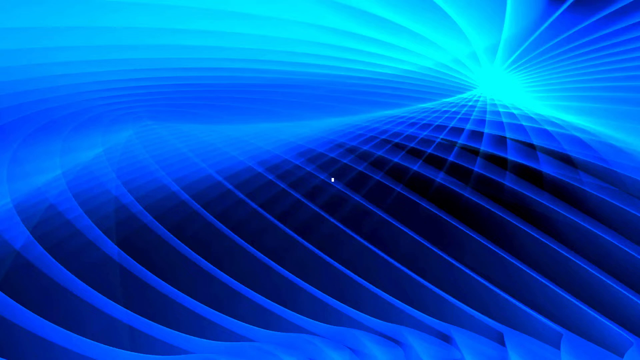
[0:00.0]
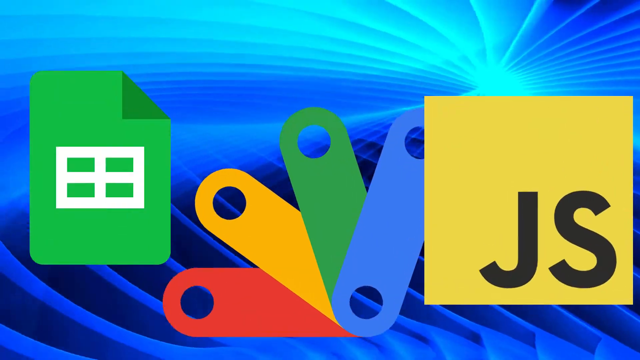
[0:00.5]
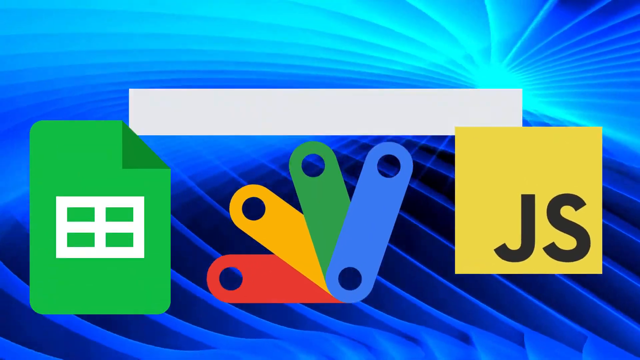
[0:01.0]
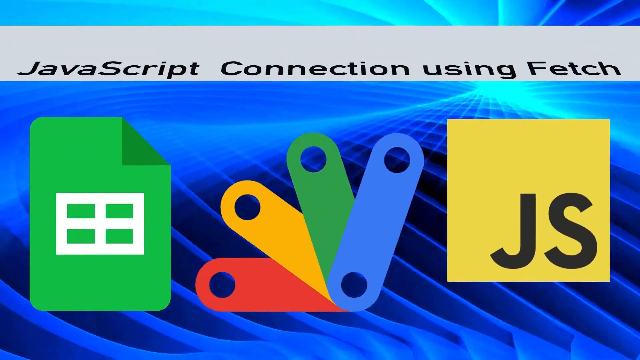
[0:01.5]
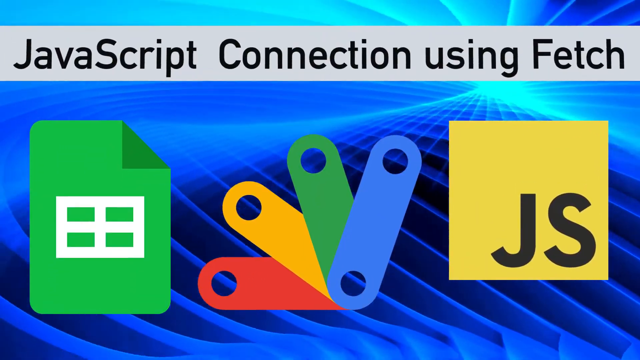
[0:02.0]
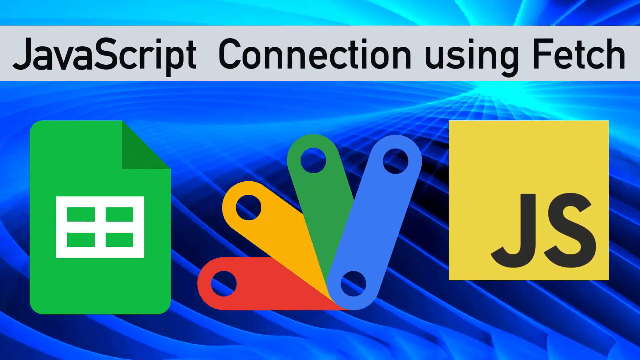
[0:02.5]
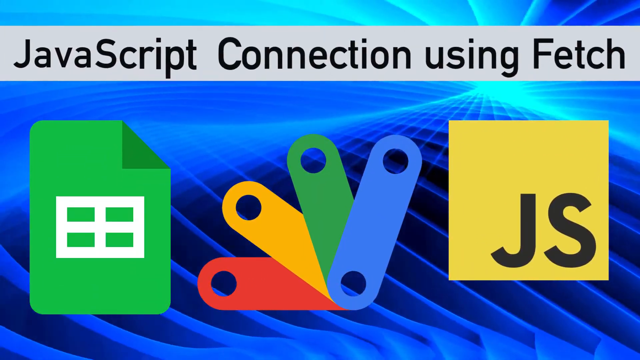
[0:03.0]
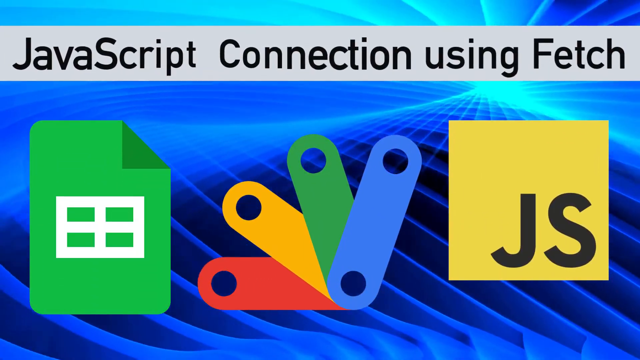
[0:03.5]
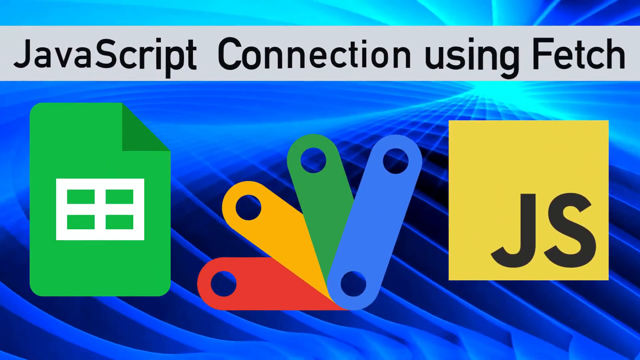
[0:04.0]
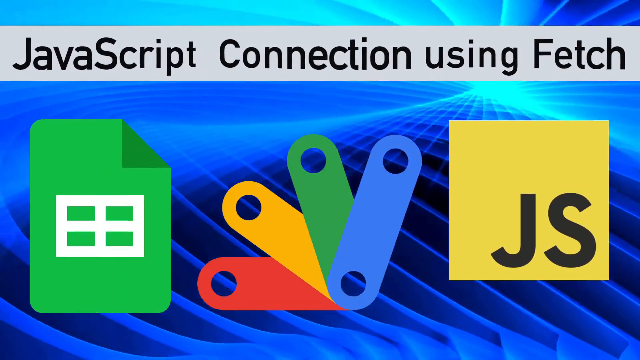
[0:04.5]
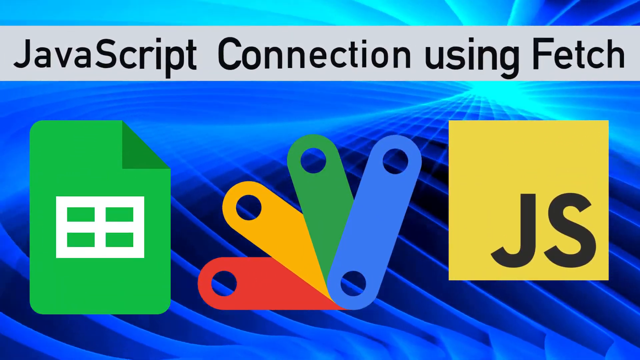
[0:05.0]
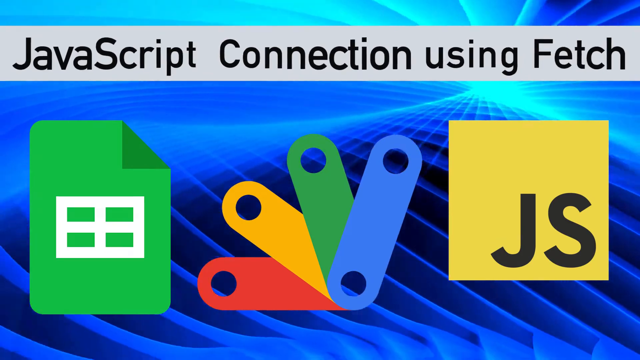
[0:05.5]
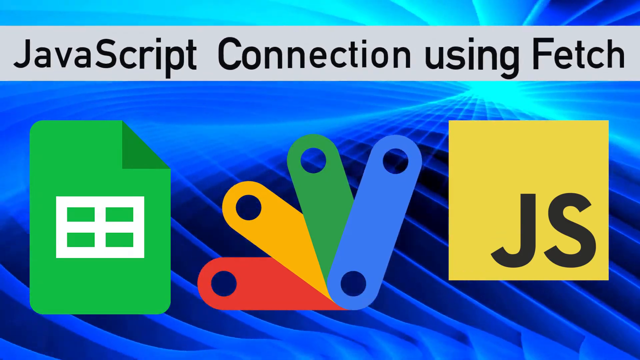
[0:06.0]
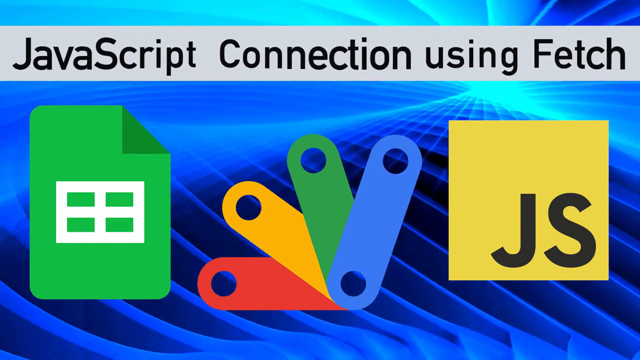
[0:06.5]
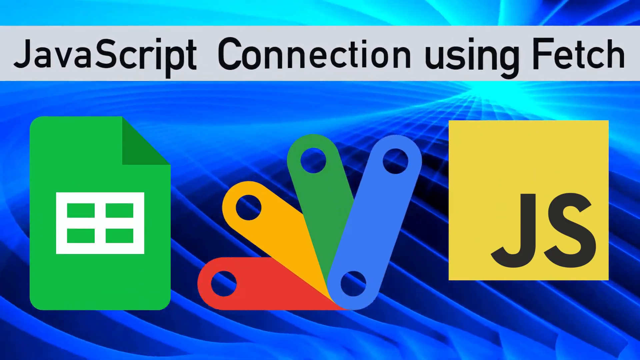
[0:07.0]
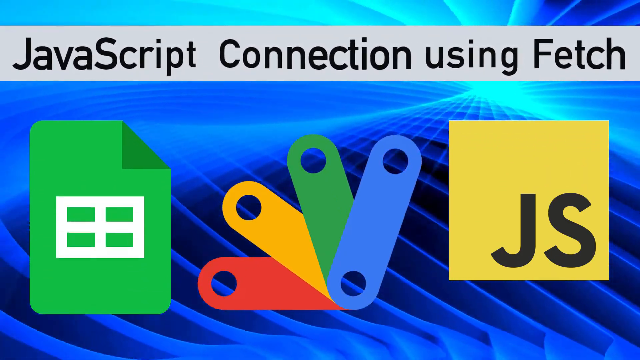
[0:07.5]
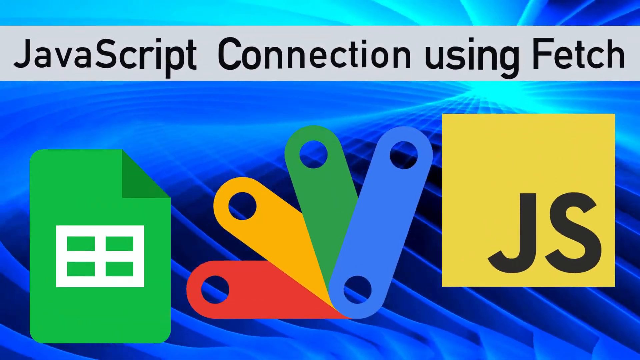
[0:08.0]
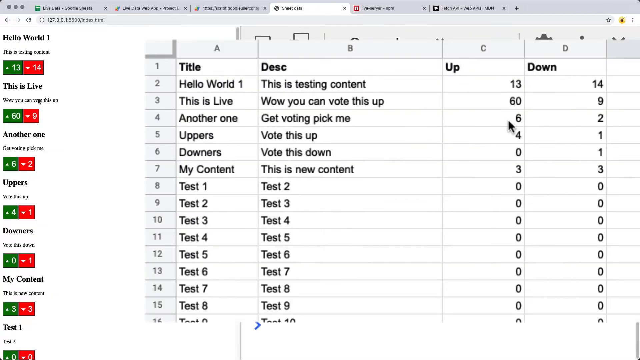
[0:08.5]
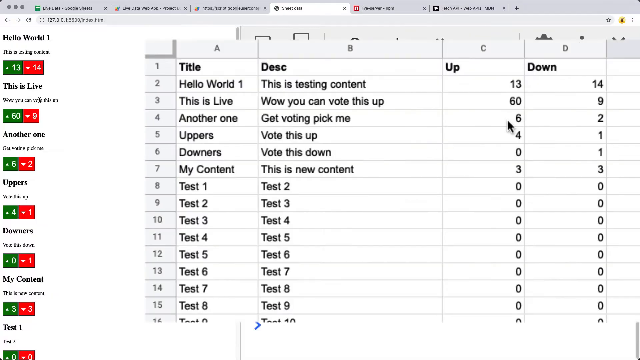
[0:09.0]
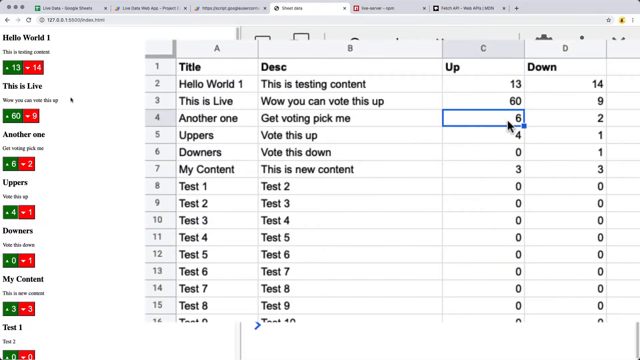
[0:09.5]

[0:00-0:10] The video concerns a JavaScript connection using fetch. There is a green icon, a yellow one, and another yellow one with JS written on it. The green one has a white box with four on it, and another is like a star in red, yellow, green and blue. JS is also written there. An Excel sheet appears with numbers written in it; the sheet is white, and to the left there are red and green buttons on the page. The numbers are small but clearly visible.